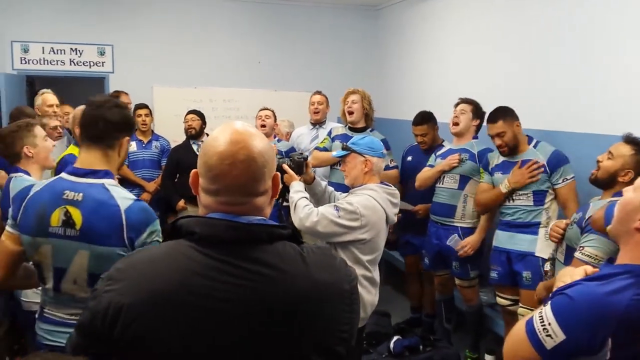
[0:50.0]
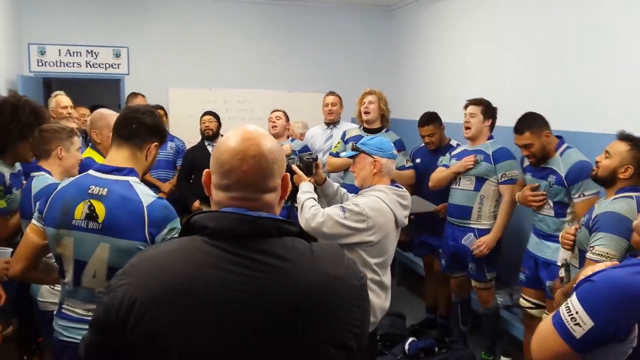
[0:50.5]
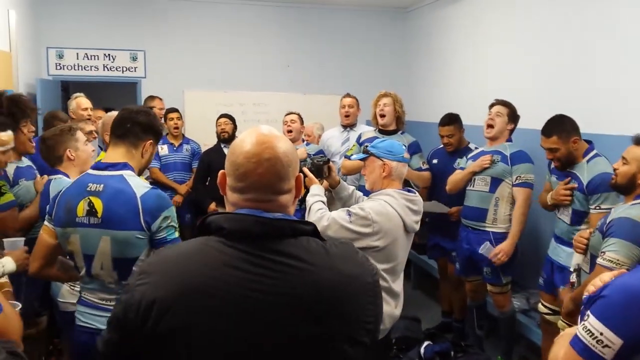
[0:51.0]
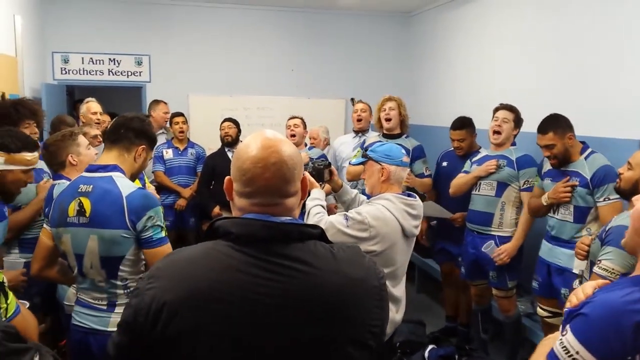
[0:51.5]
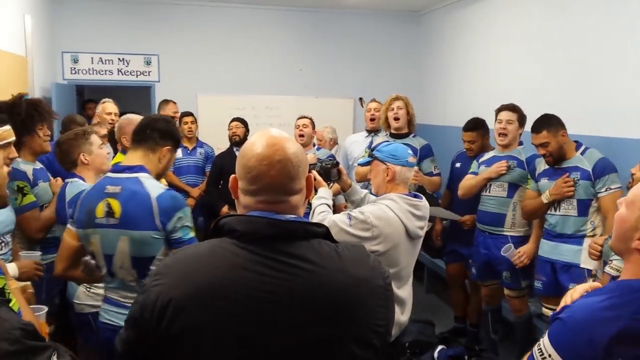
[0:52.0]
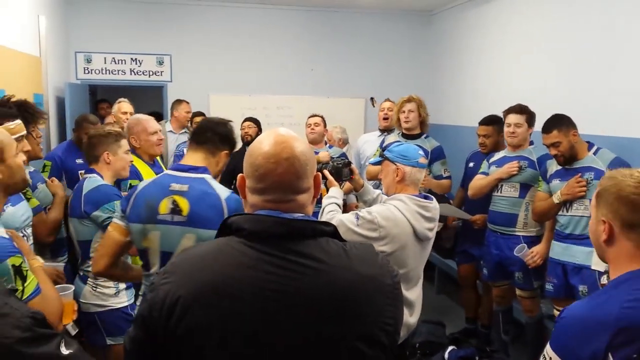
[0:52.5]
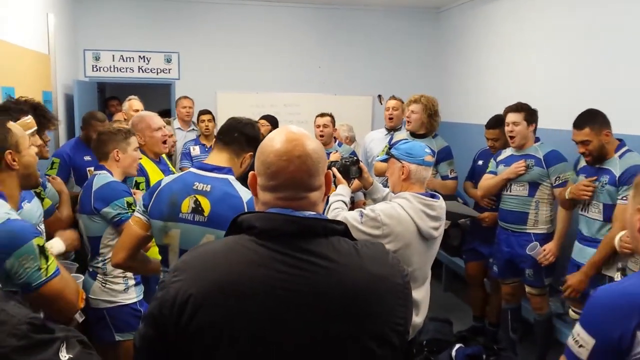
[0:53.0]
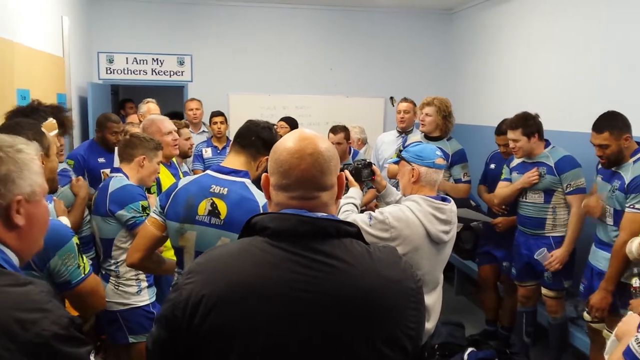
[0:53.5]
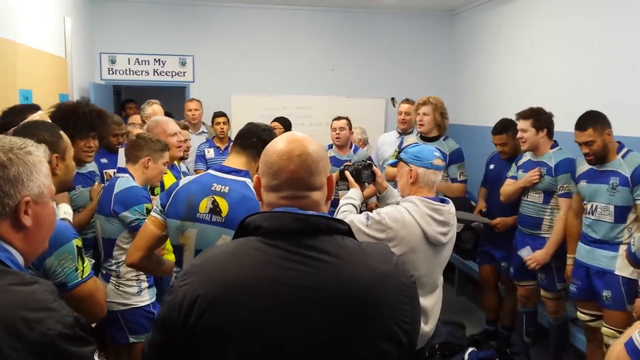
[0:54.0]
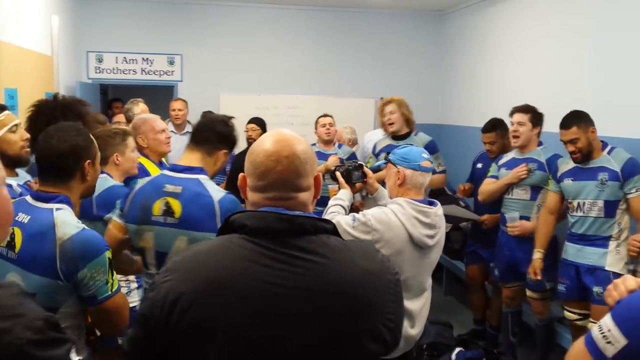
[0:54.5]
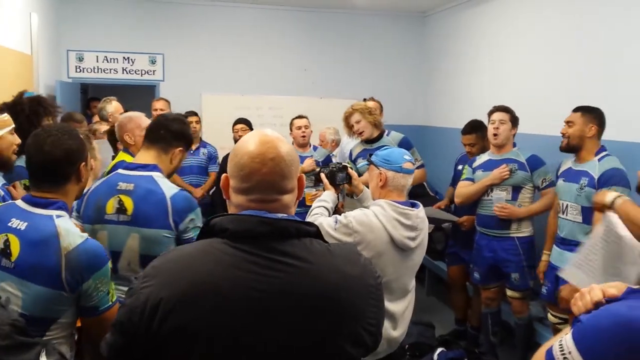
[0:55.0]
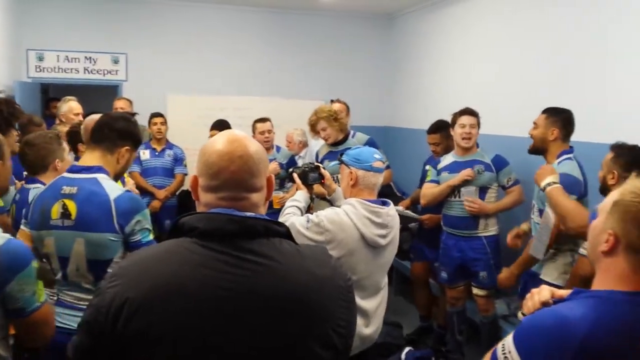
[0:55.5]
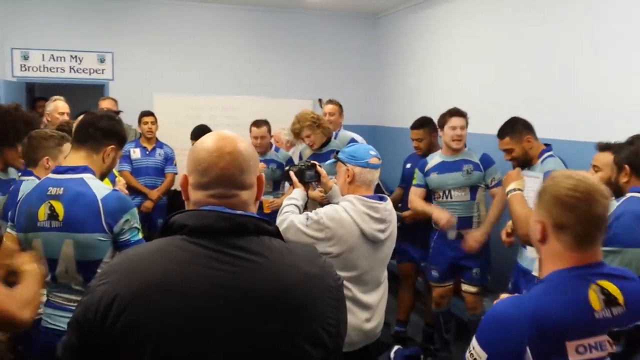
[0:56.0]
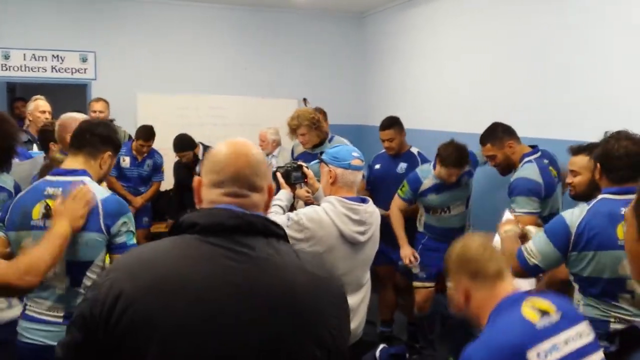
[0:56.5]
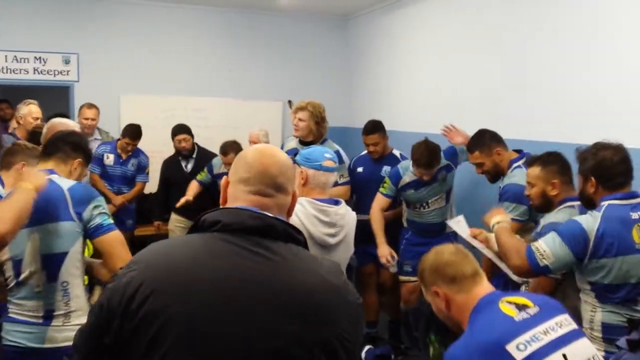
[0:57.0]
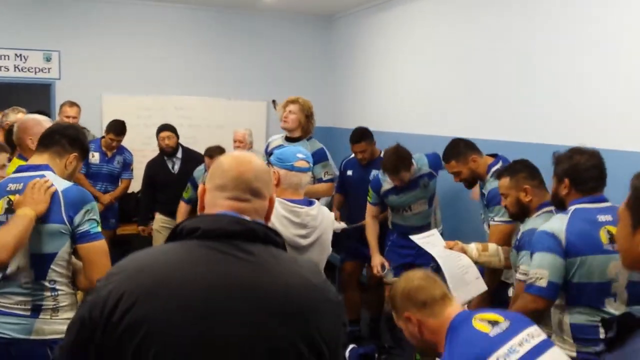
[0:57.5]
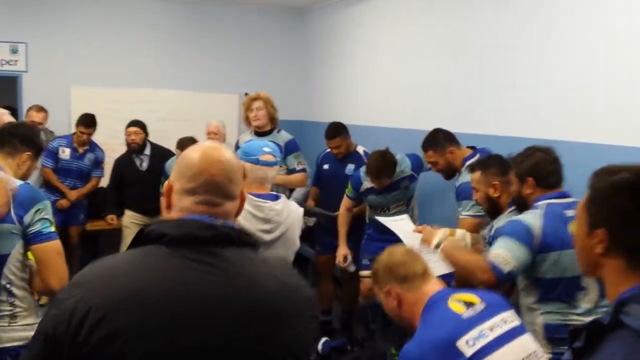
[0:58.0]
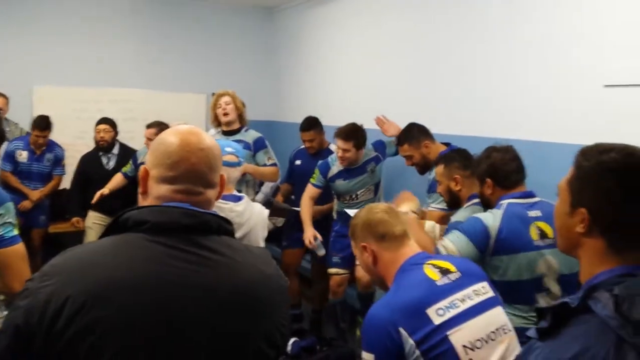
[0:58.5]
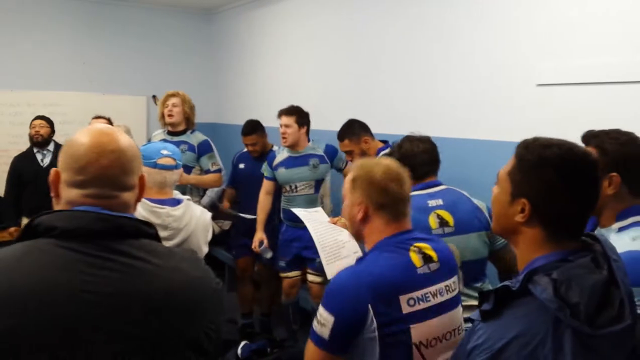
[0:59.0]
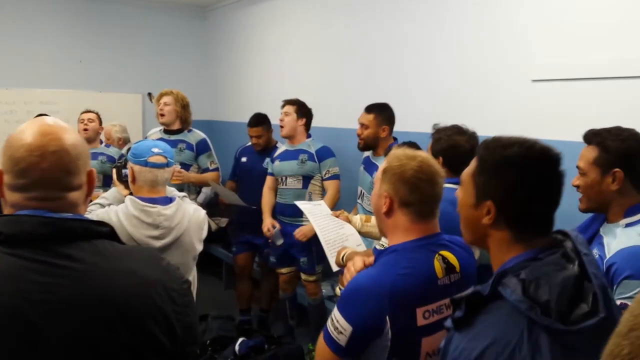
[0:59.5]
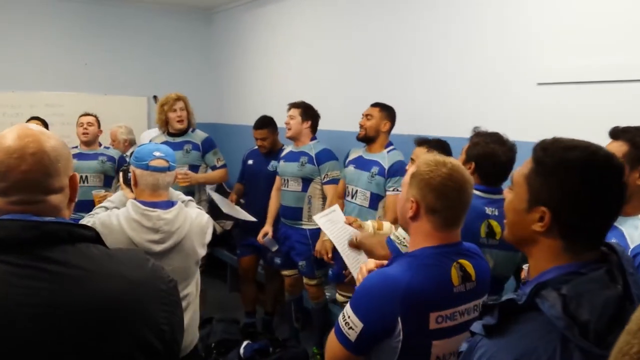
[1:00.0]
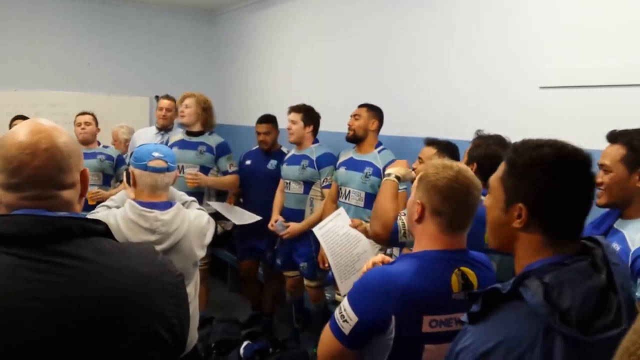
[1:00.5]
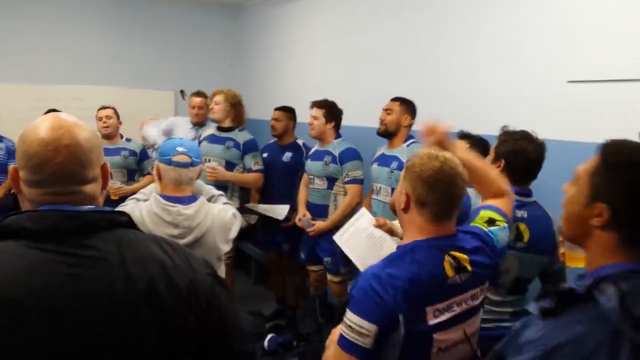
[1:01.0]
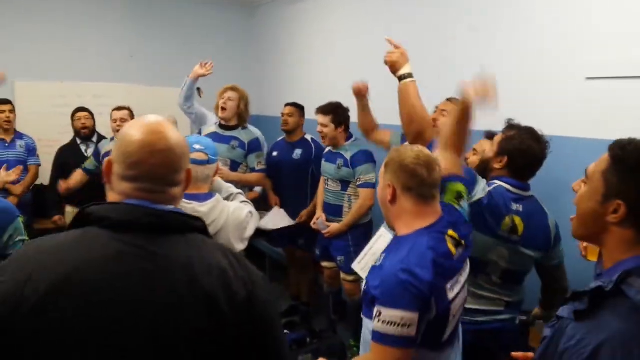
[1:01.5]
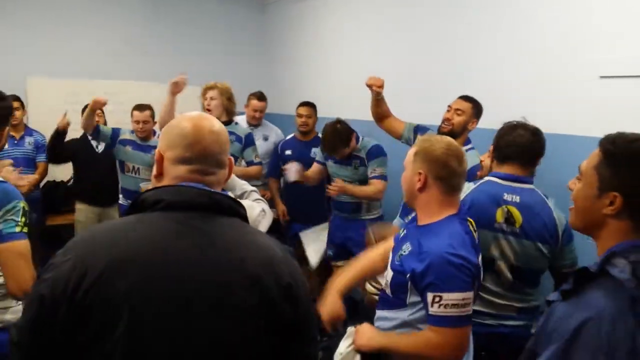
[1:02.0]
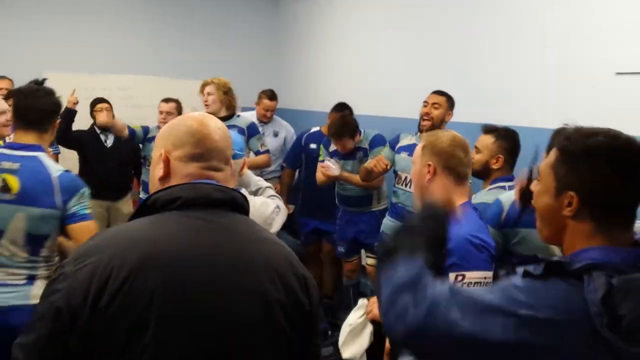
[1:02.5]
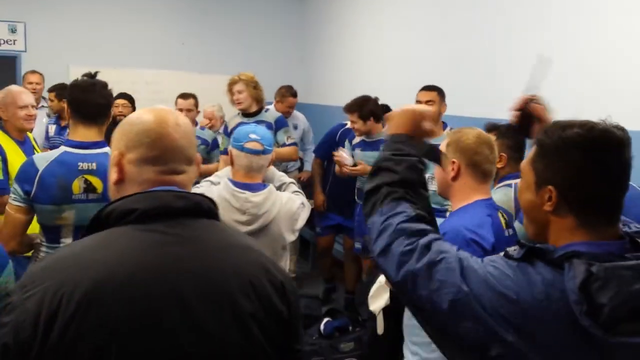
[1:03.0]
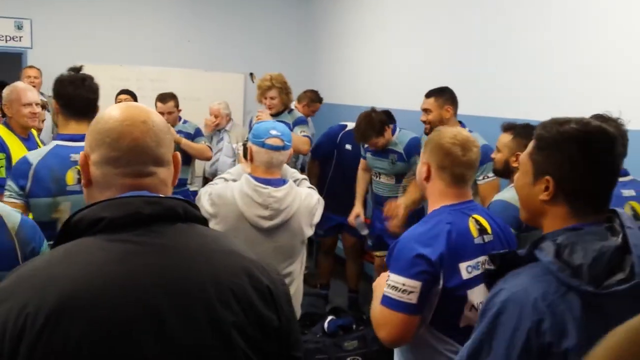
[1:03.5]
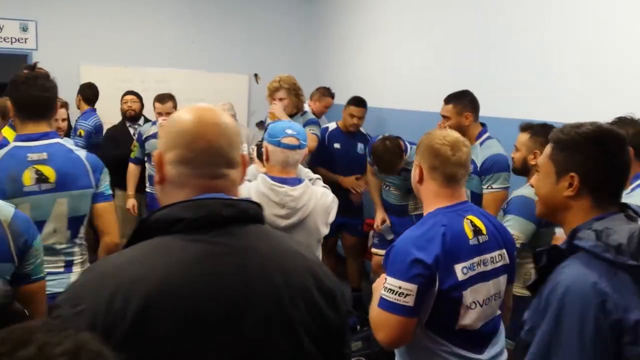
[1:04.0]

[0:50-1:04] The players have their right hands over their hearts as they finish the song, looking very happy and excited. The person filming is now fixated on one area near the door. Toward the end, the rugby players start stomping and look like they are about to do some kind of haka dance, then suddenly stop, throw their fists in the air at the same time, and cheer.